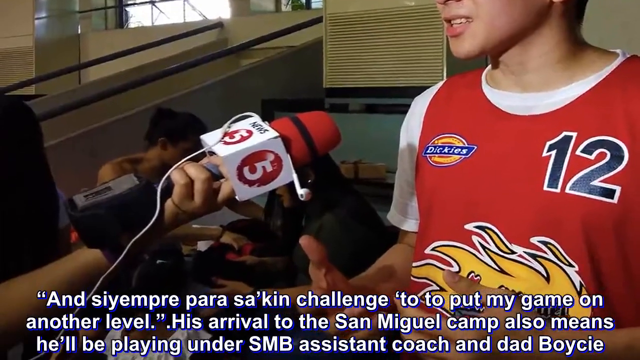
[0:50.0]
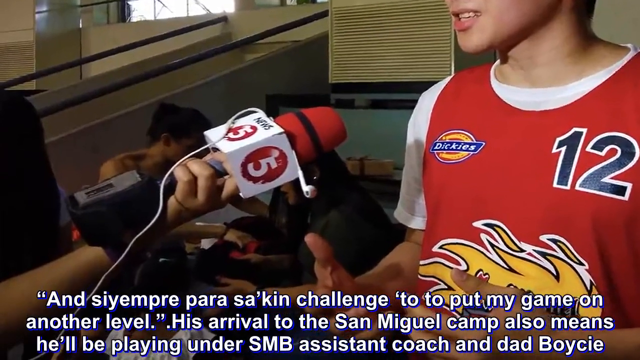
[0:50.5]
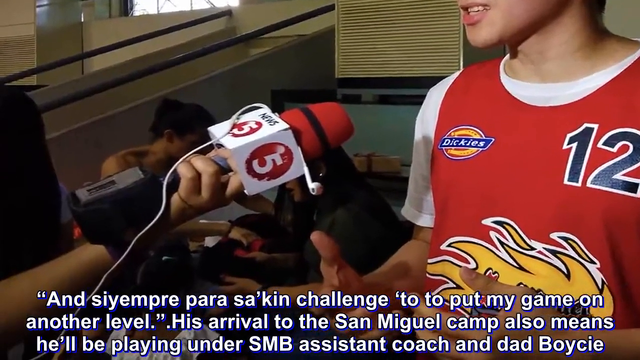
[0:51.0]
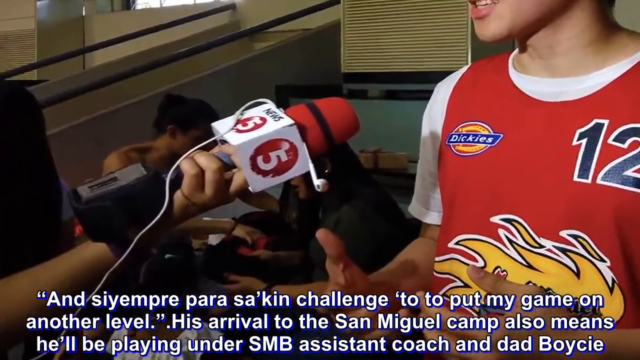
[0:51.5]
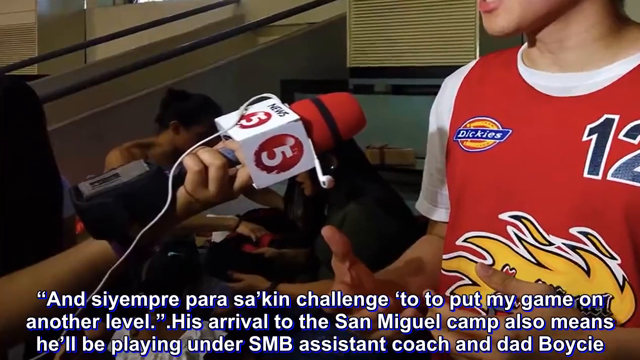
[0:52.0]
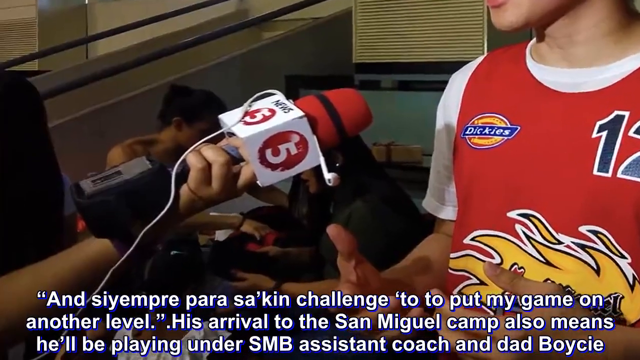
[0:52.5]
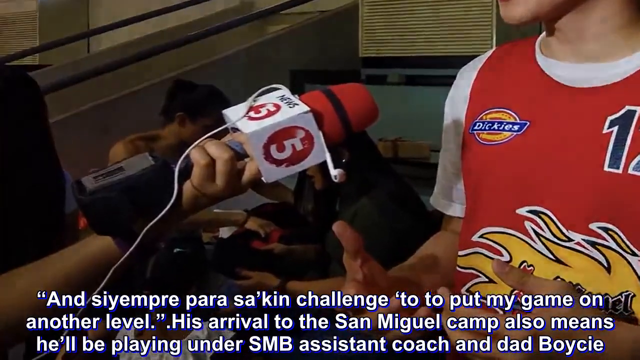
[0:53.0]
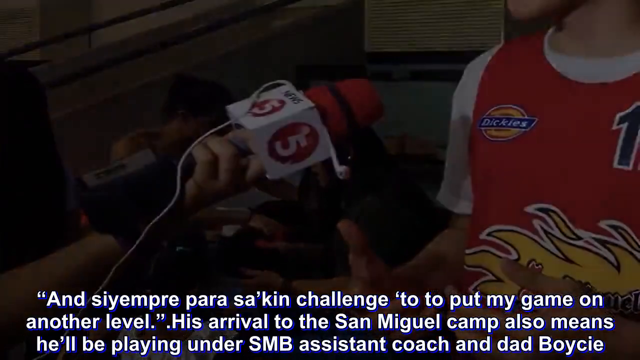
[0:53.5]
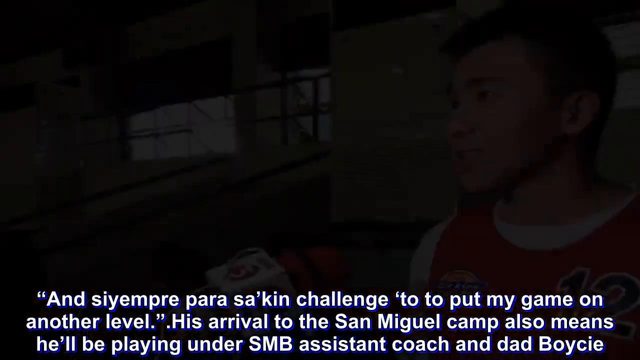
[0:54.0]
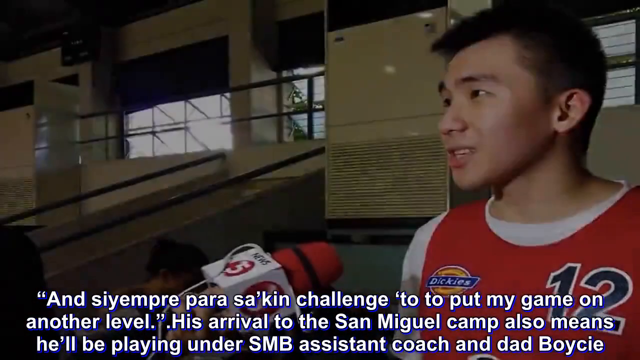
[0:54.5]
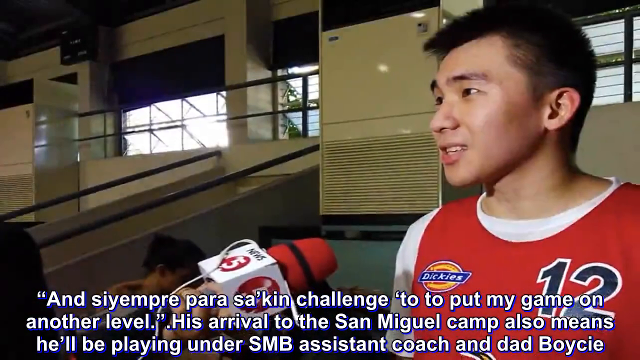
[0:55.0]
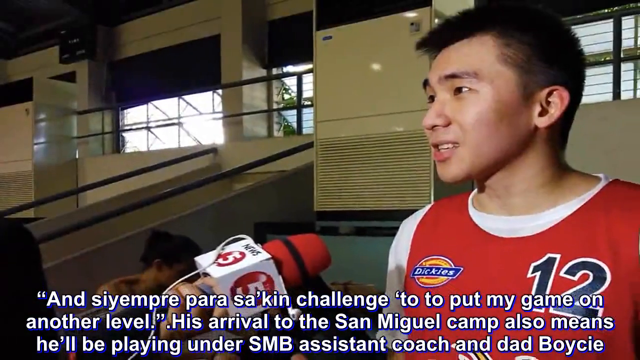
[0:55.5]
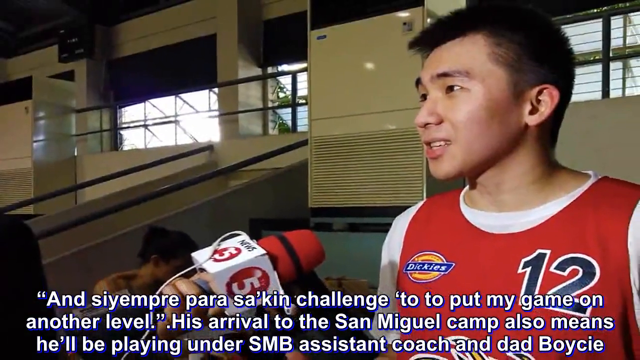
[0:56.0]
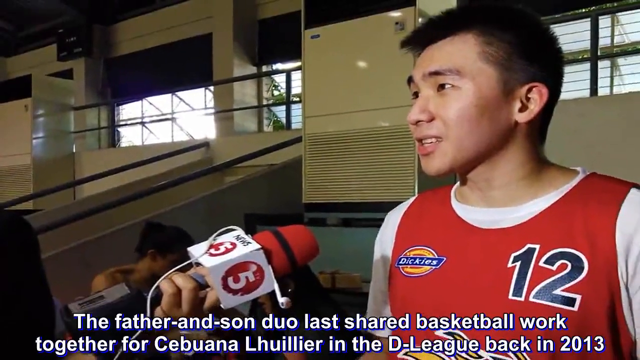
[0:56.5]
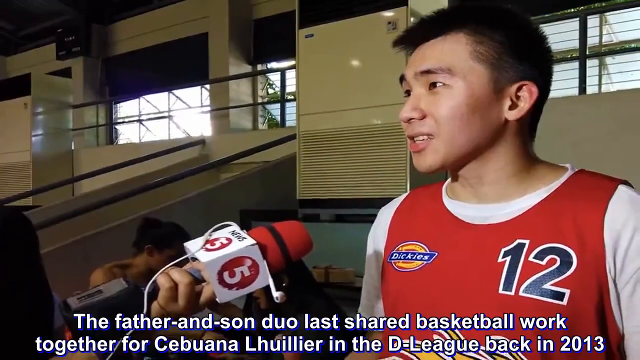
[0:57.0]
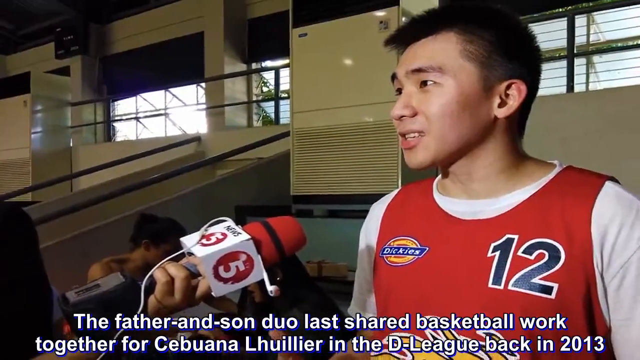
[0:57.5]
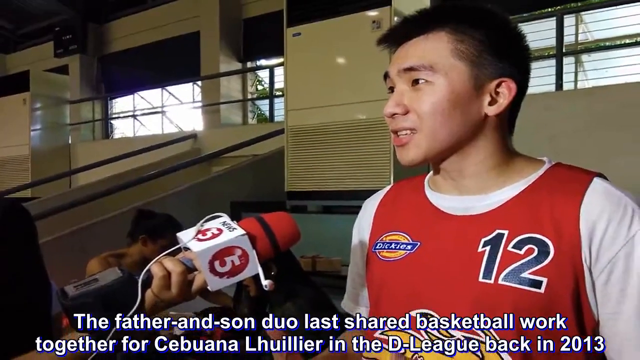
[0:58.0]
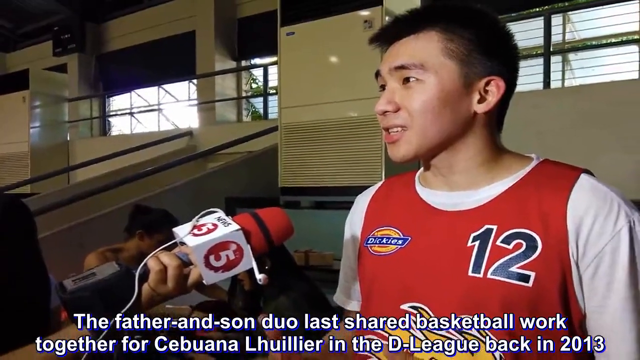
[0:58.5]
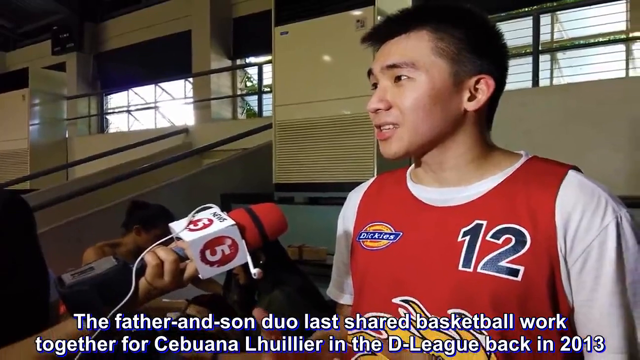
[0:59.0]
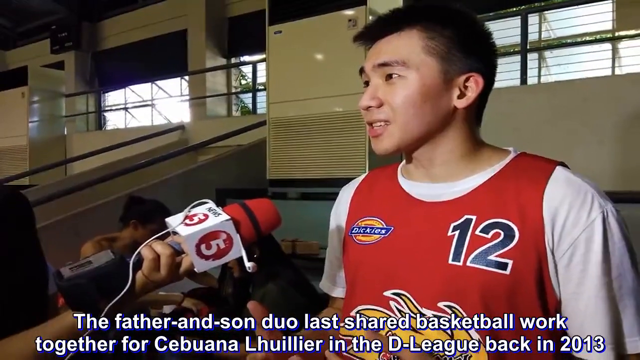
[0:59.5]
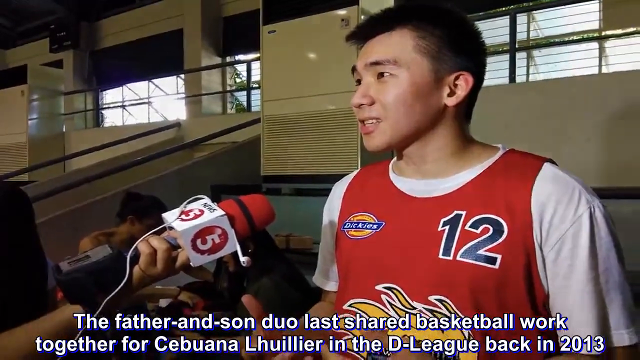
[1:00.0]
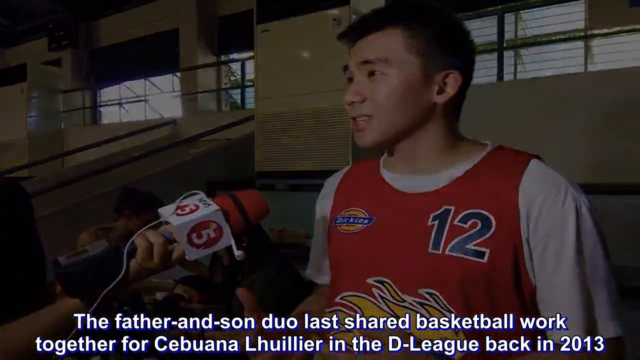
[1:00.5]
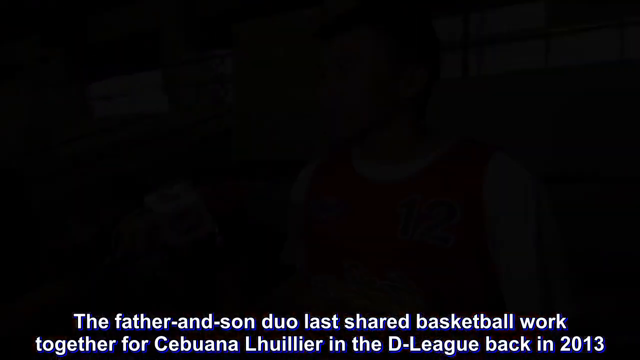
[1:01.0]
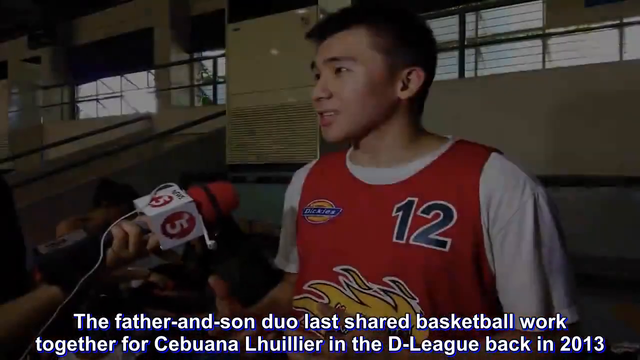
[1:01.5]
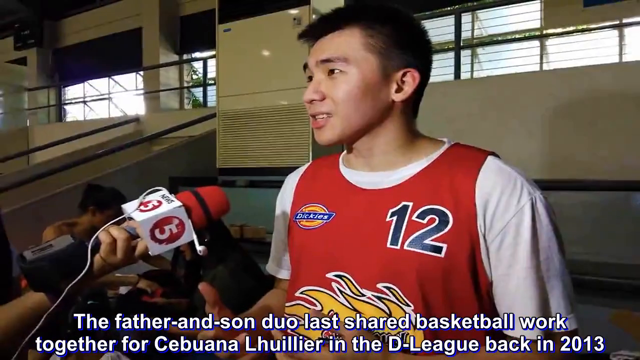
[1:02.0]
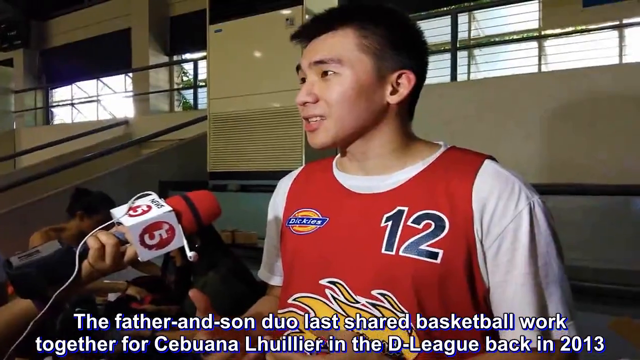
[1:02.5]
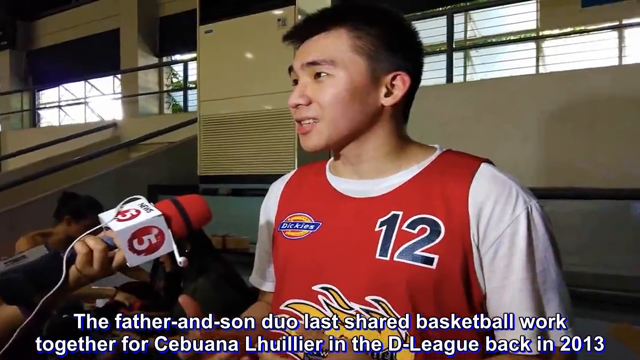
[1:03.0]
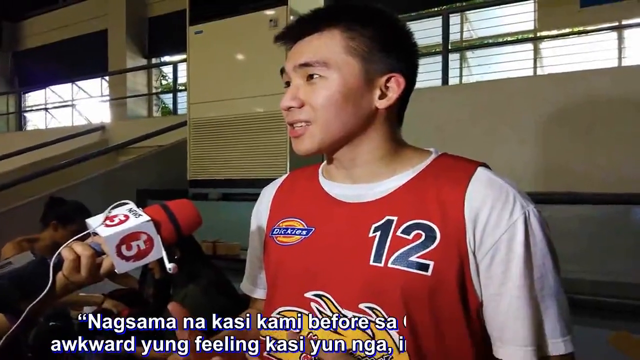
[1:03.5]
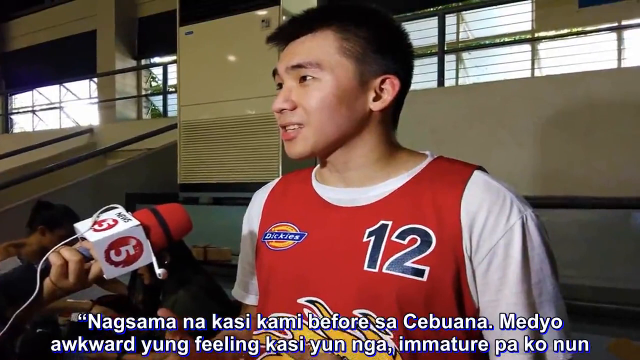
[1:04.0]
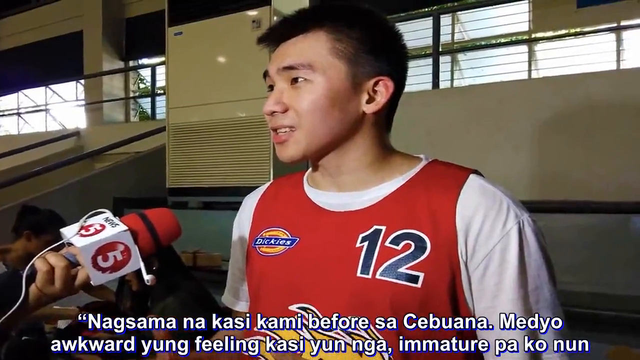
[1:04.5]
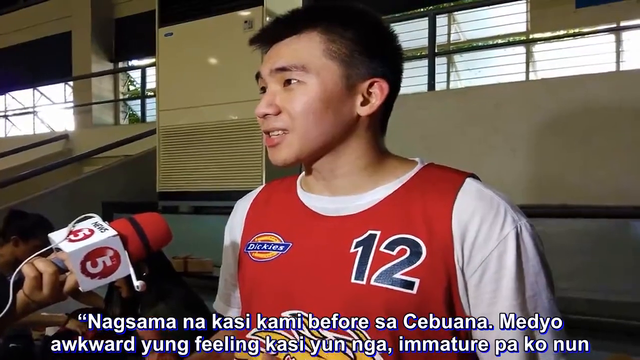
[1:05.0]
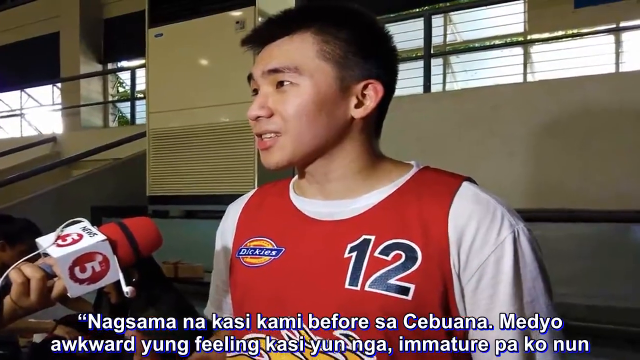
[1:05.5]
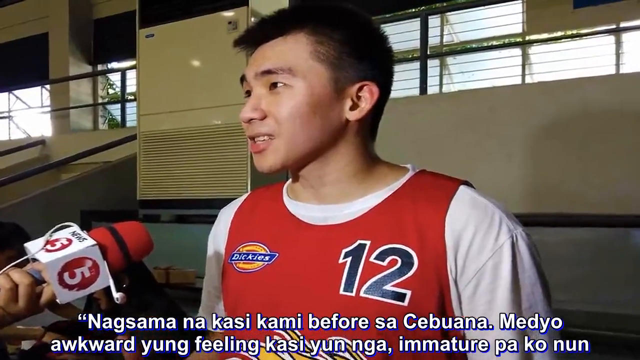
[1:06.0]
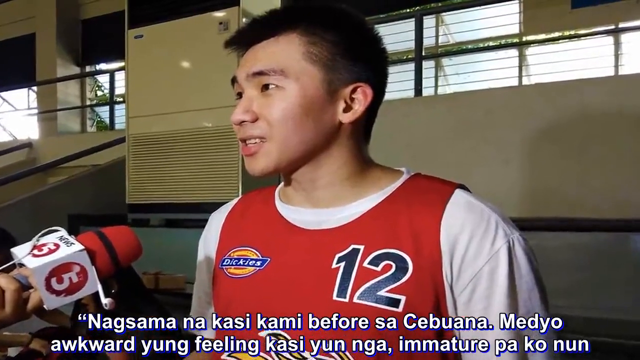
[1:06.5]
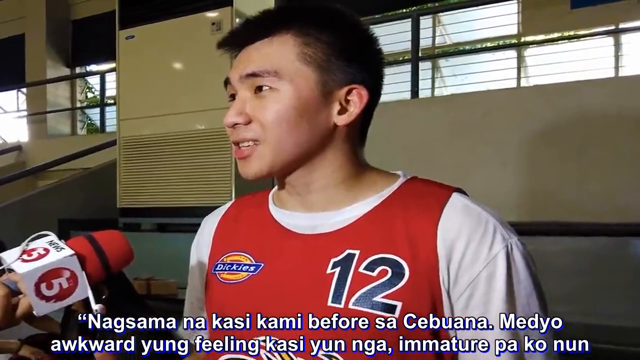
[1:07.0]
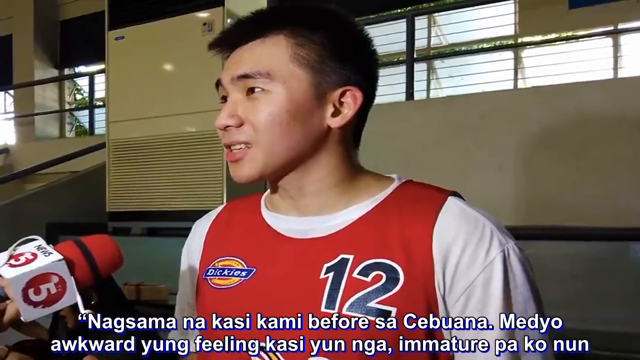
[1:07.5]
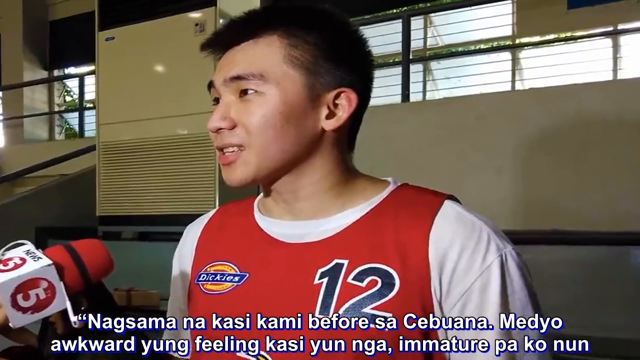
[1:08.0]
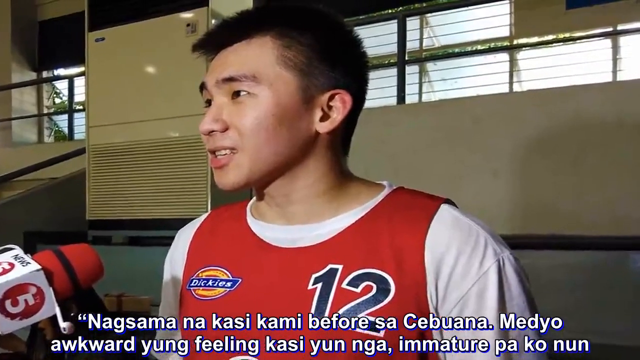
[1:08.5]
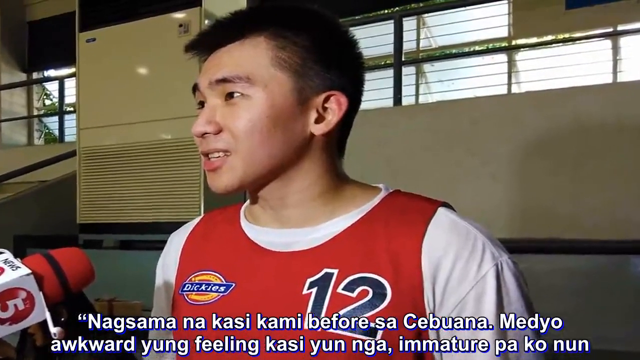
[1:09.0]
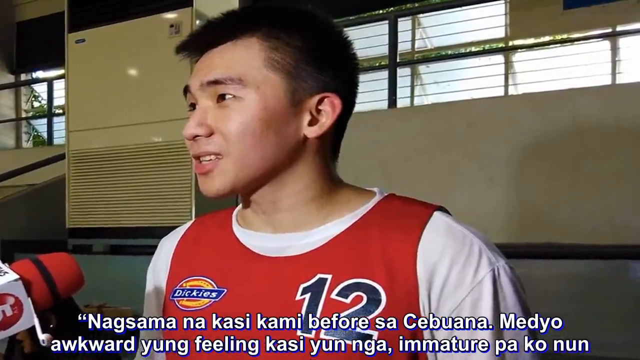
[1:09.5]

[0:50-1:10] The same scene focuses on a basketball player on the right side, an Asian male with short black hair, wearing a red jersey with number 12 at the top left of the chest, a Dickies sponsorship at the top right, and a white undershirt. He looks to the left with both arms slightly raised in front of him in the still image. On the far left, a person who also looks to be of Asian descent holds out a microphone with their arm. The microphone has the word "news" and the number five on it, and its tip is red. An earbud with a wire is placed on the microphone. White subtitles appear at the bottom middle. The camera zooms in toward the arm of the woman holding the microphone, then flashes back to the same image, this time zooming outward. English text appears at the bottom middle beginning "the father and son duo last shared" and mentioning "CEBUANA LHUILLIER in the D League back in 2013". The screen blinks again and the subtitles switch to a foreign language.